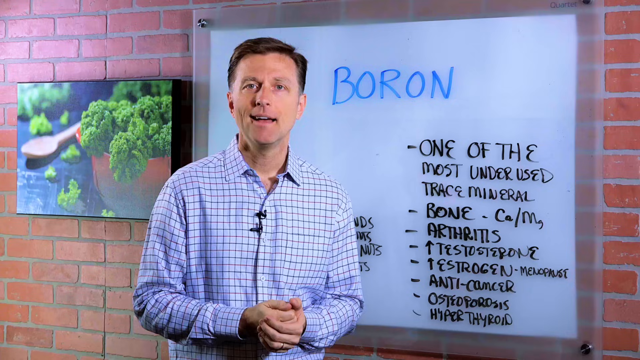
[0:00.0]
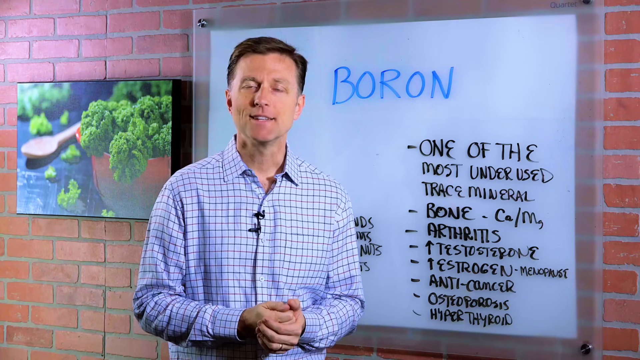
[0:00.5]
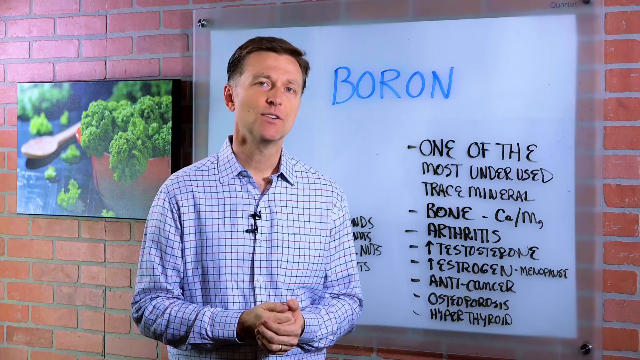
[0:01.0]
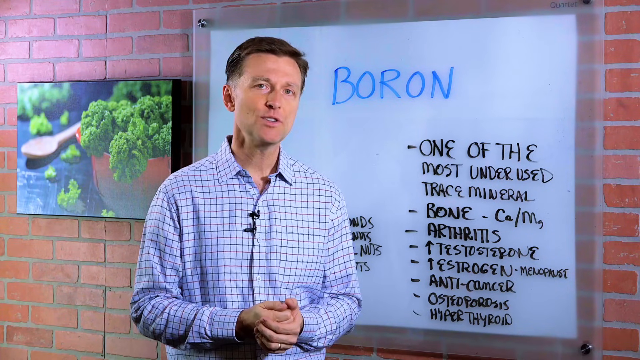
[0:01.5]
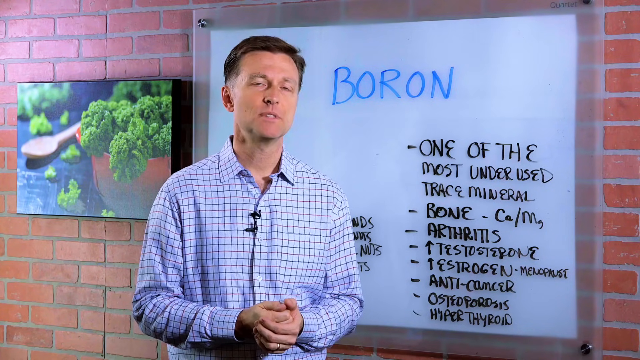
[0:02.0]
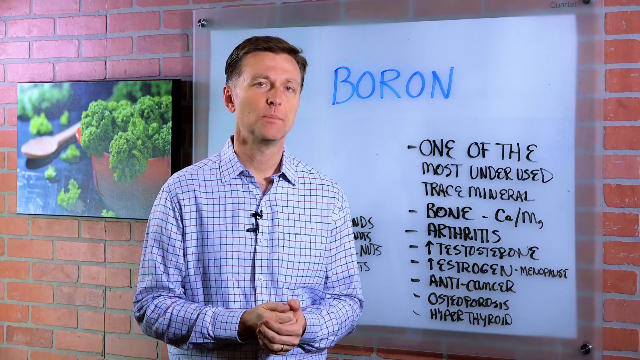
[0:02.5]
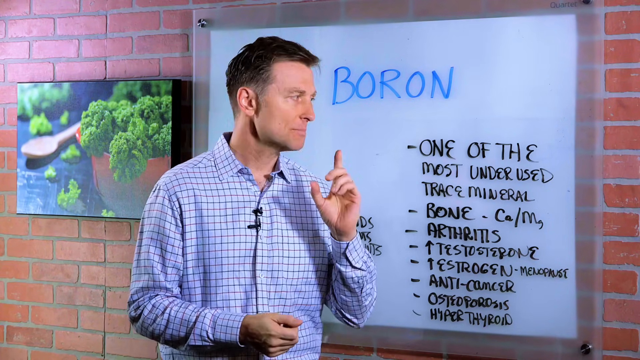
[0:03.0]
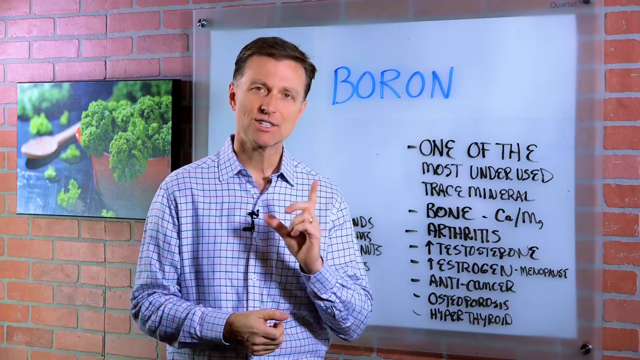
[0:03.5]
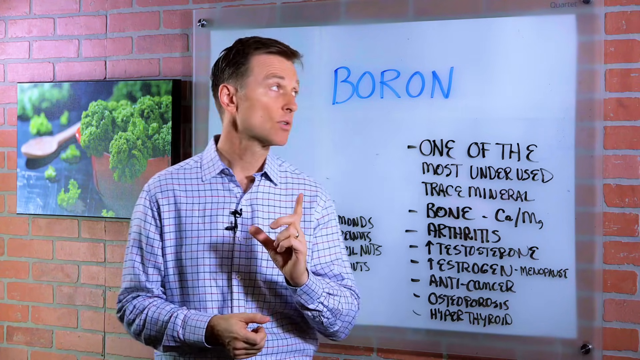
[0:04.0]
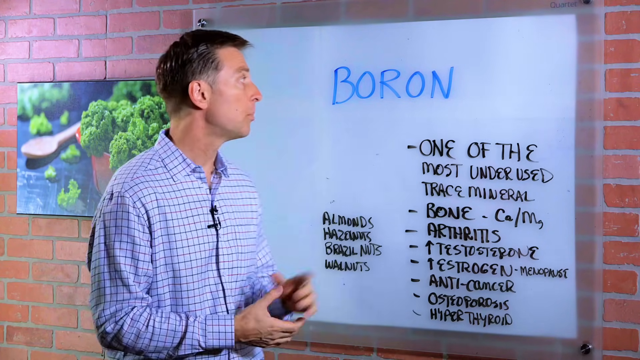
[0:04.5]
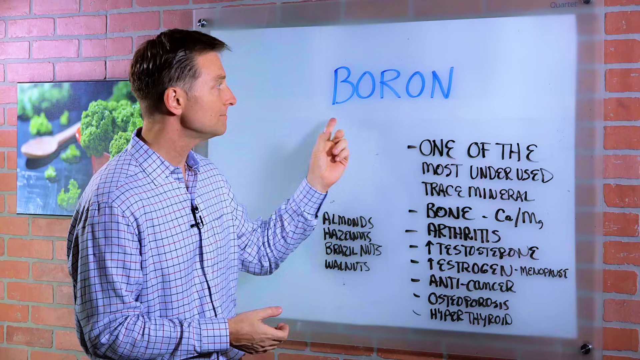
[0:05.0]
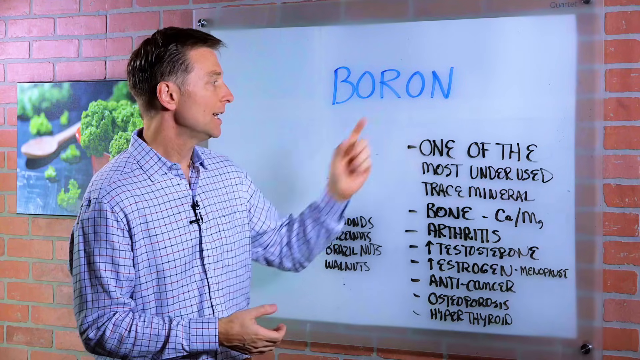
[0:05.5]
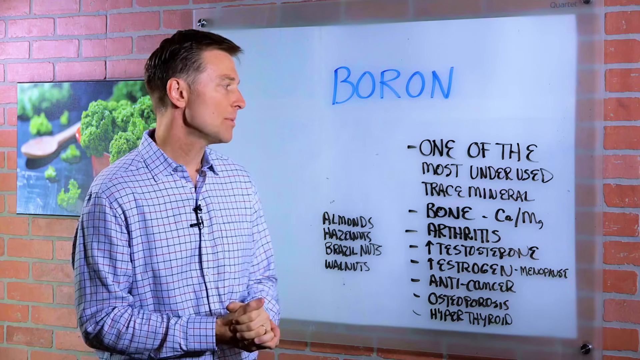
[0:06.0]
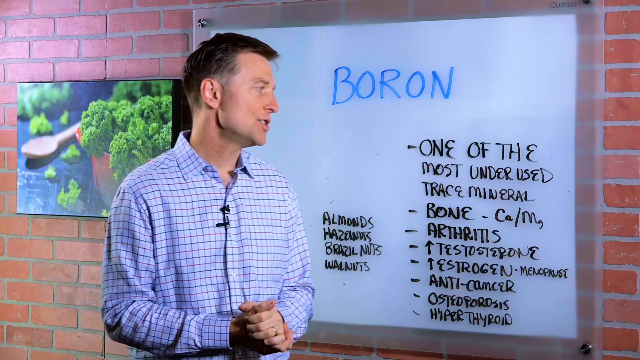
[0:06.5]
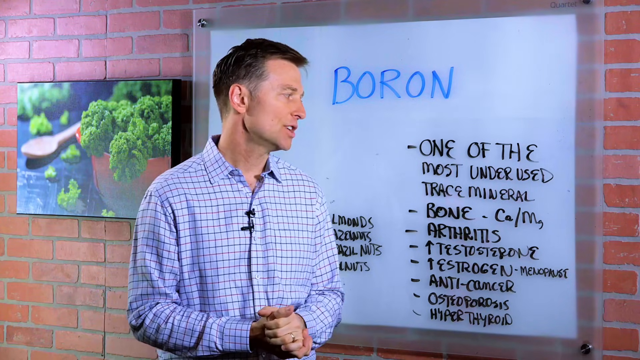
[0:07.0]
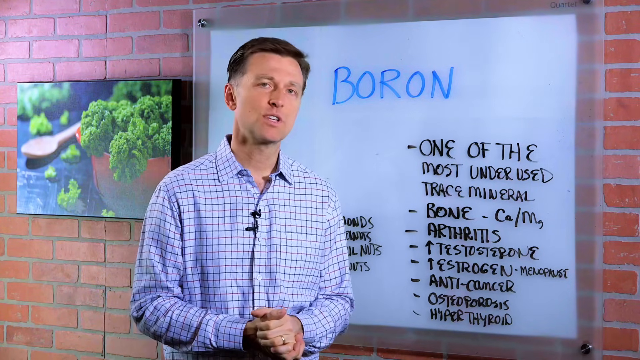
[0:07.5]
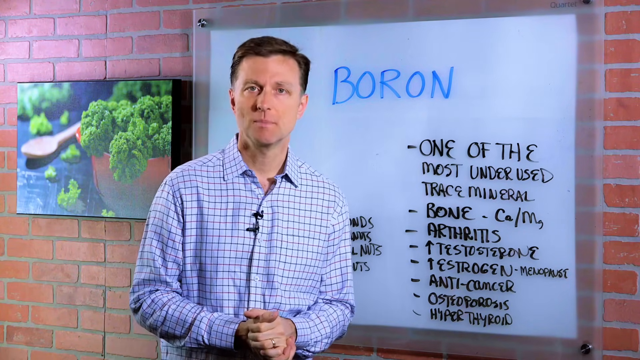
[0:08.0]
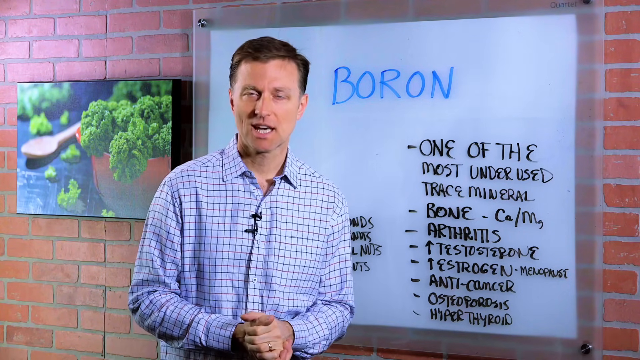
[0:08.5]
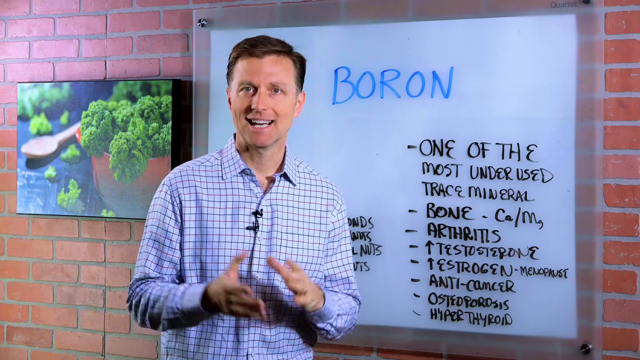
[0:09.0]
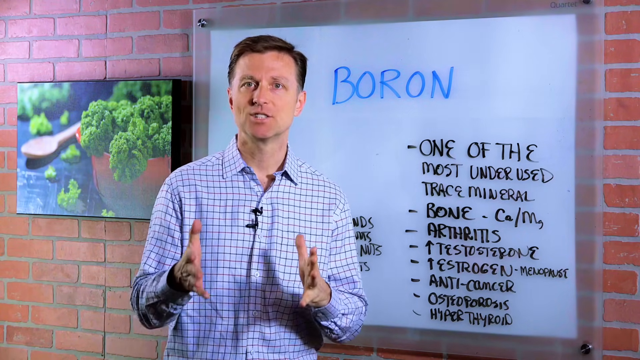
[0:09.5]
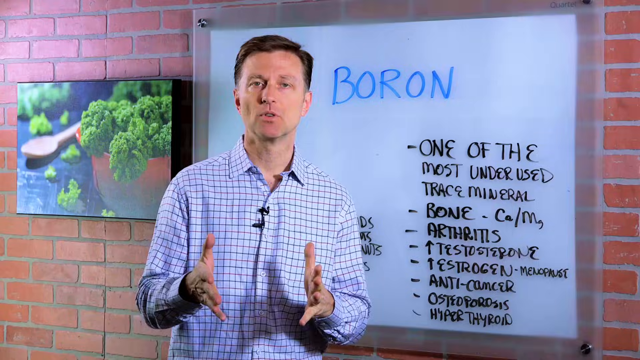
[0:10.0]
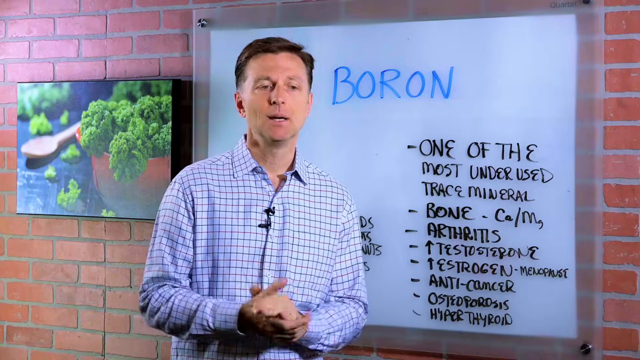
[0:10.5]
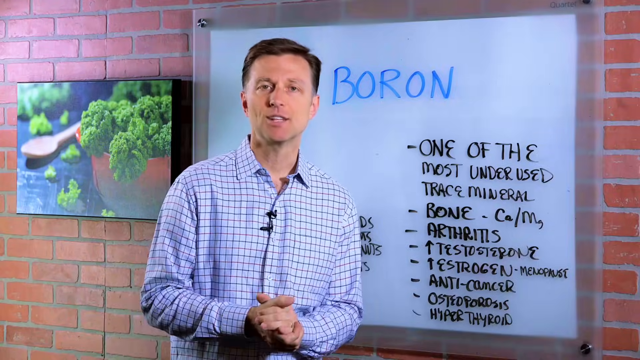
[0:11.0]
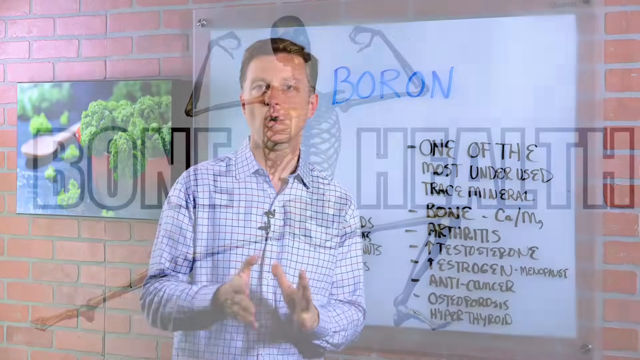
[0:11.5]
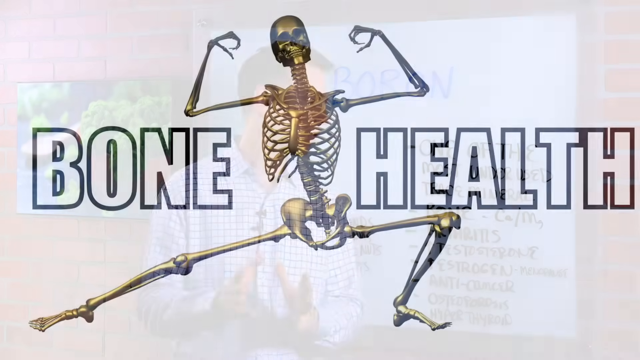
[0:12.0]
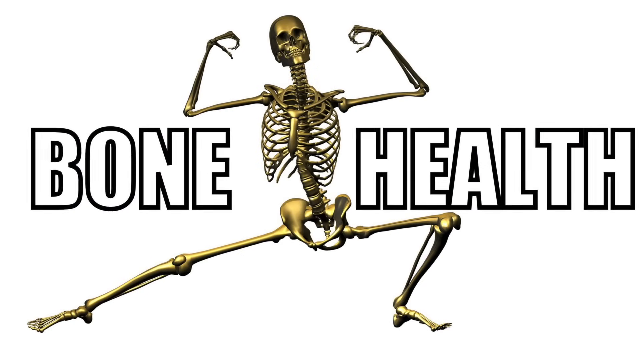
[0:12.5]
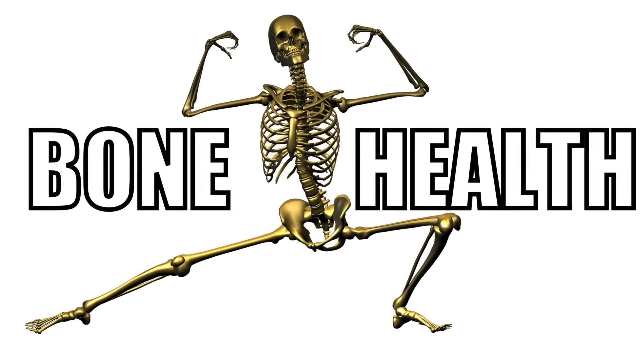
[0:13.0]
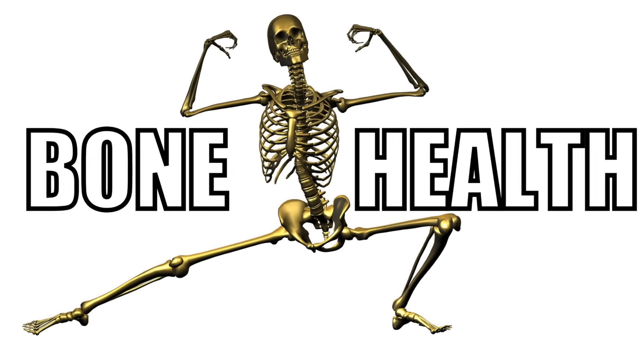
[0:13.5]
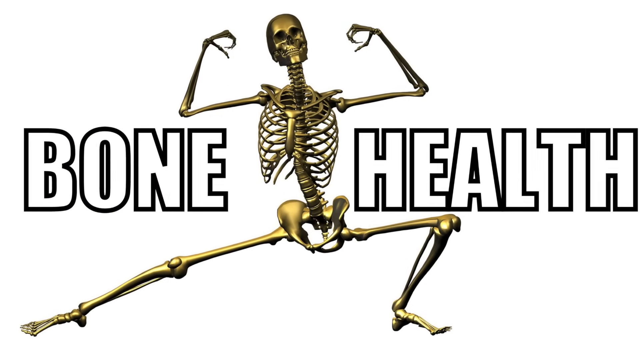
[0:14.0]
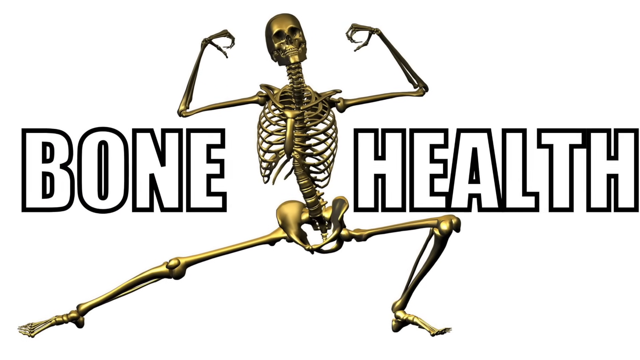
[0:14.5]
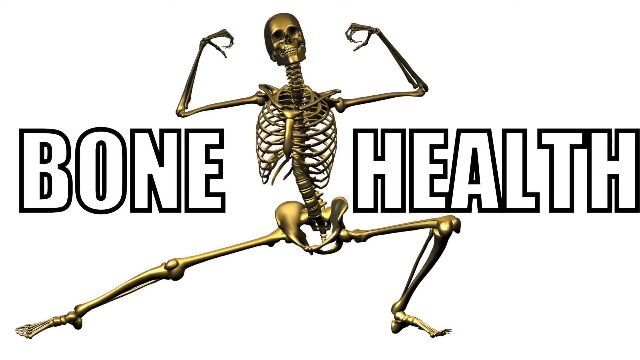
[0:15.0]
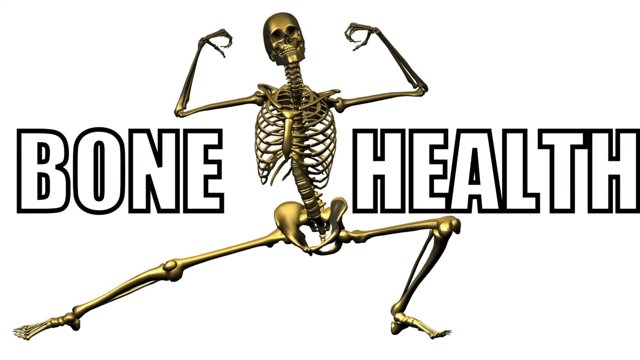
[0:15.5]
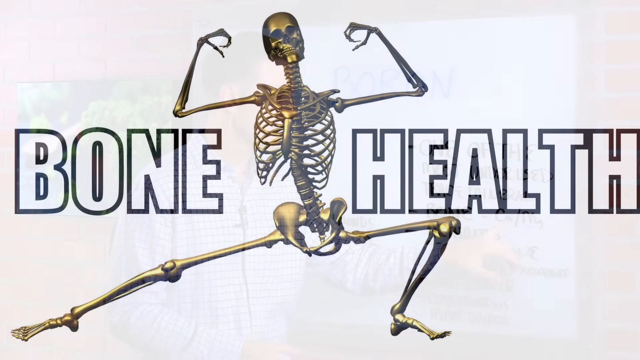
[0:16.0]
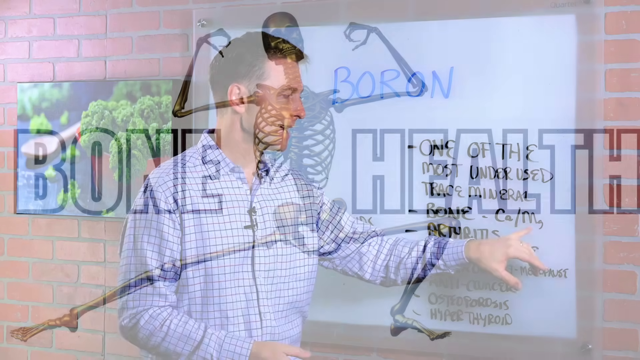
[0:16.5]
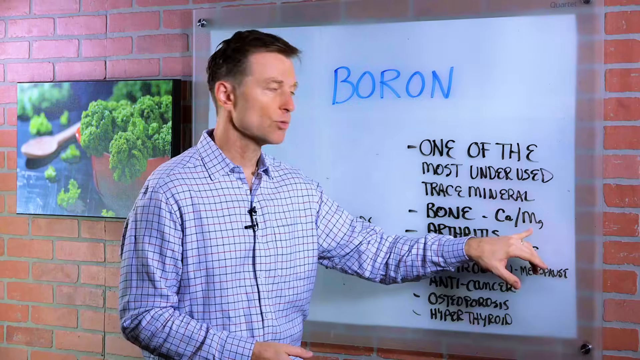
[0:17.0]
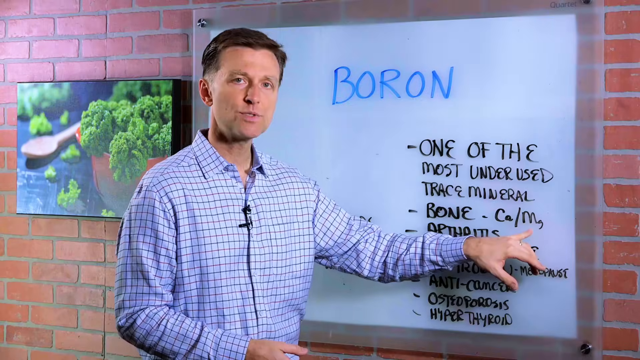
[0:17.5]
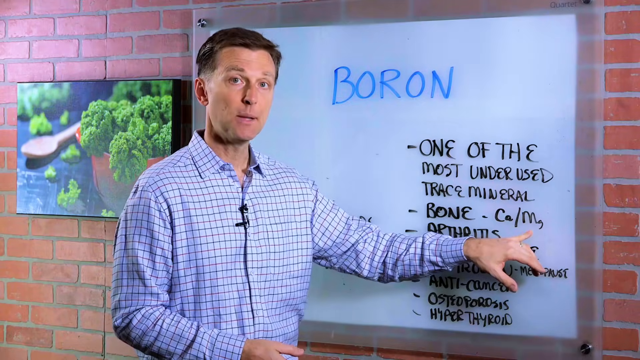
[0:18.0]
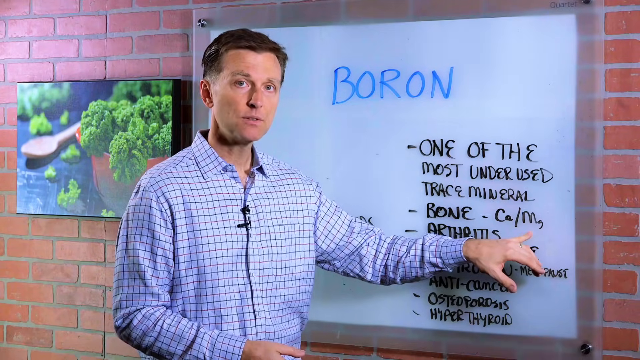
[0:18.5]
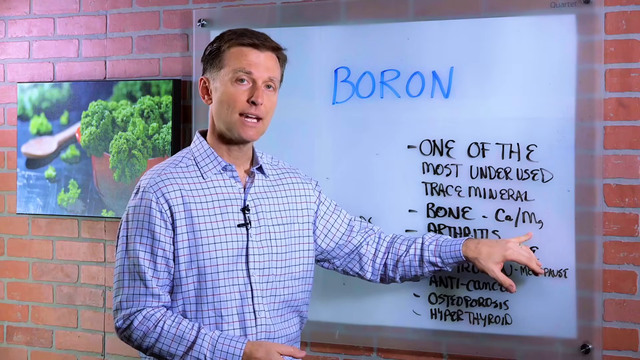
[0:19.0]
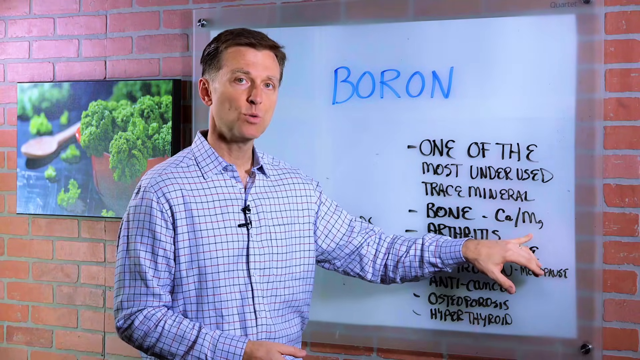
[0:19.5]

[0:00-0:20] A man with short brown hair, wearing a blue checkered button-up shirt, stands talking to the camera. Behind him is a white board that says "Boron," spelled B-O-R-O-N. The video cuts to a picture of a skeleton with "bone health" across the screen. On the board behind the man it says "one of the most underused trace minerals," and the board also lists "bone," "arthritis," "testosterone," "estrogen," "anti-cancer," "osteoporosis," and "hypothyroid." Behind the board is a red brick wall, and to the right of the board is a painting on the wall of a bowl of broccoli and a wooden spoon.